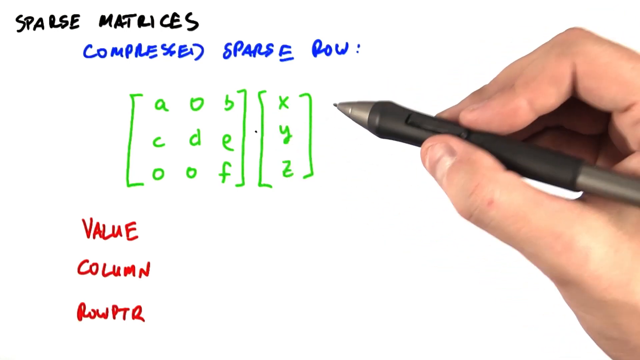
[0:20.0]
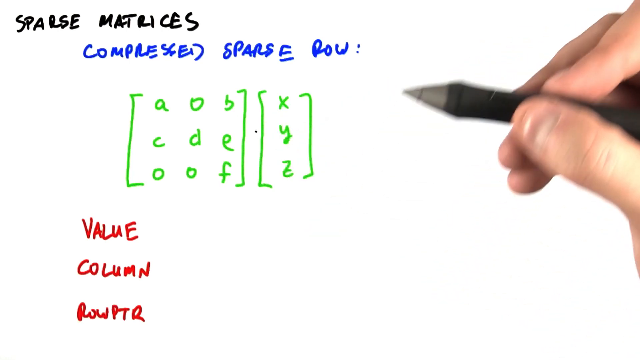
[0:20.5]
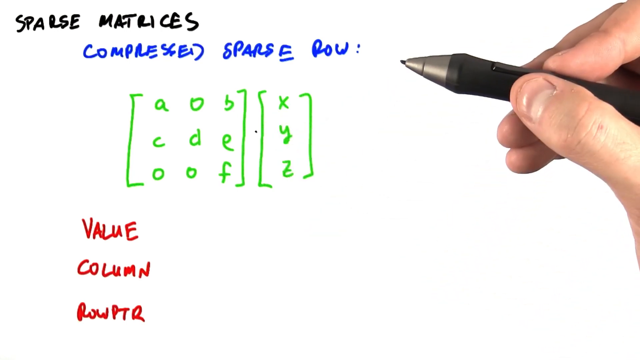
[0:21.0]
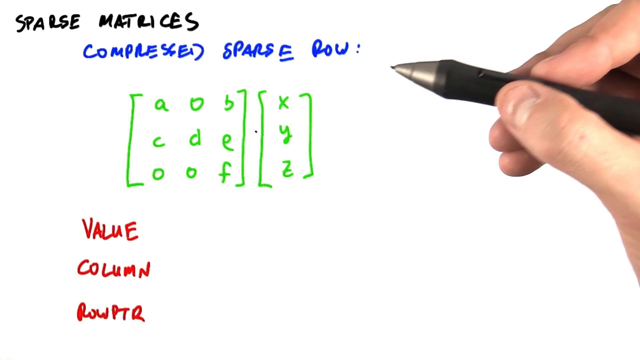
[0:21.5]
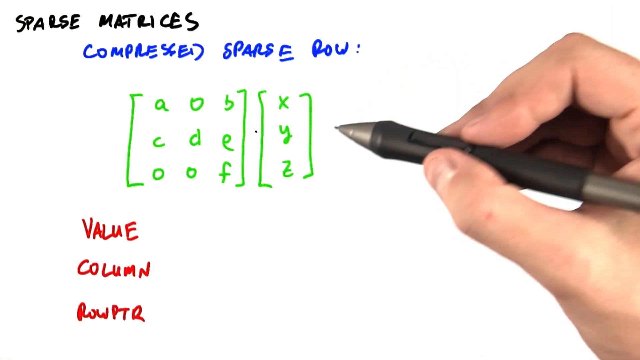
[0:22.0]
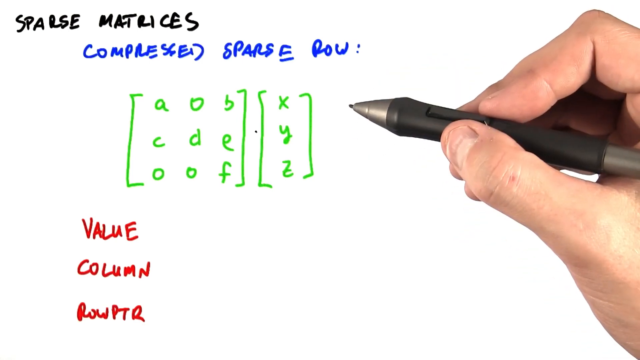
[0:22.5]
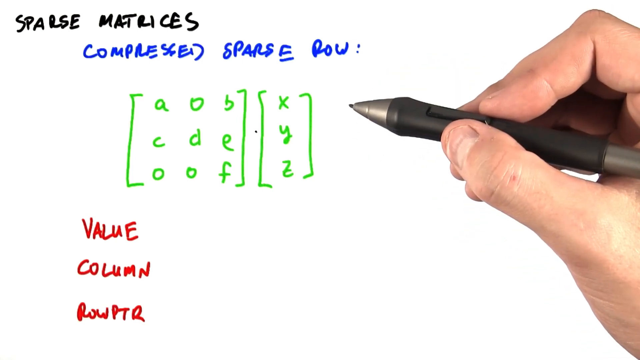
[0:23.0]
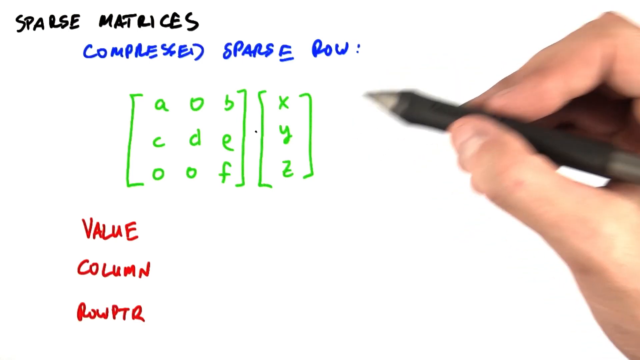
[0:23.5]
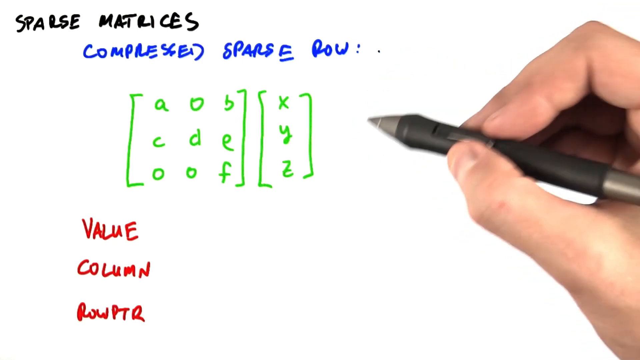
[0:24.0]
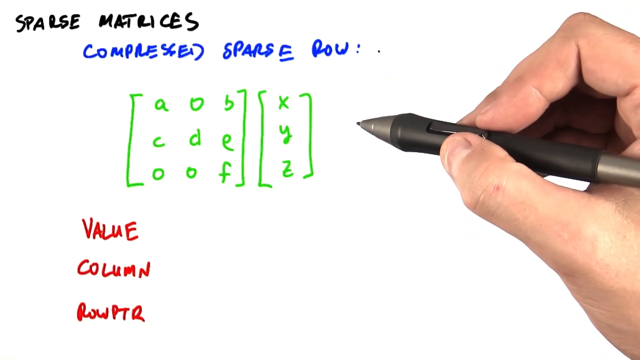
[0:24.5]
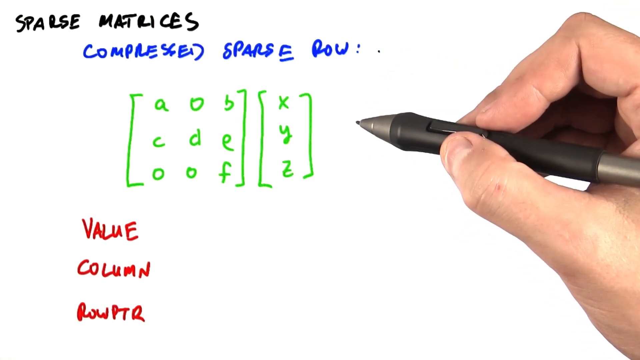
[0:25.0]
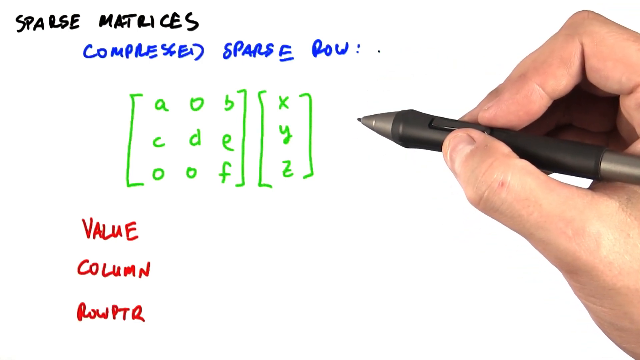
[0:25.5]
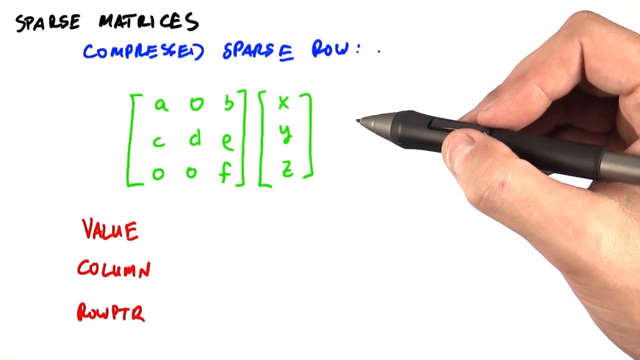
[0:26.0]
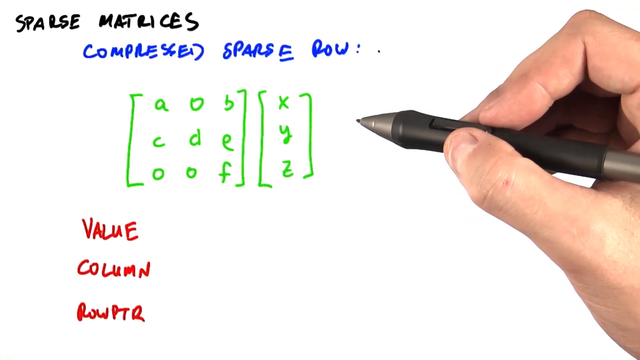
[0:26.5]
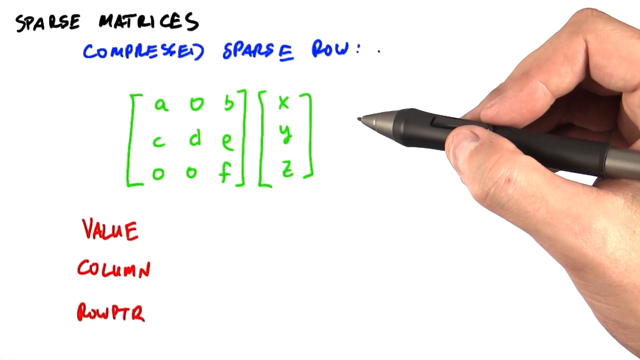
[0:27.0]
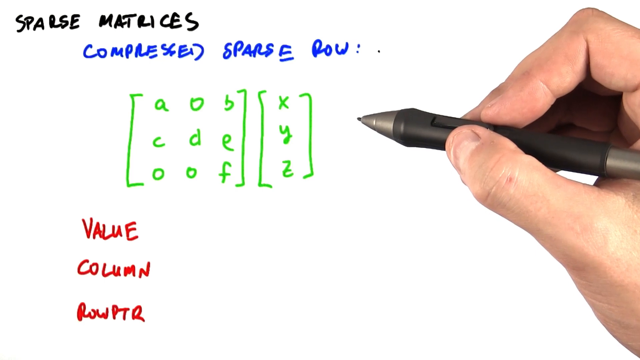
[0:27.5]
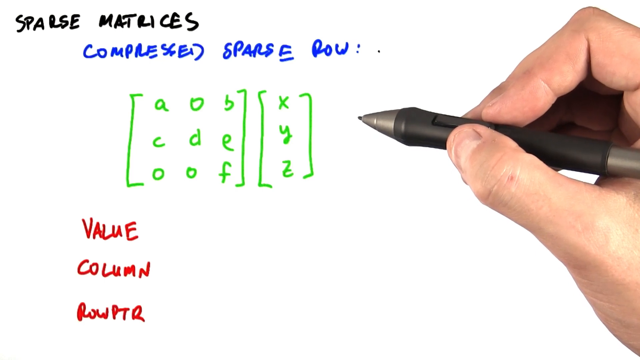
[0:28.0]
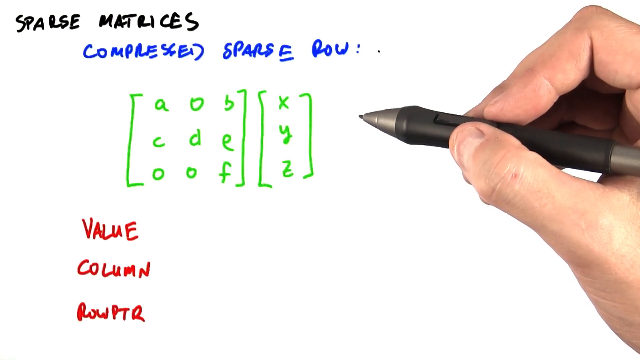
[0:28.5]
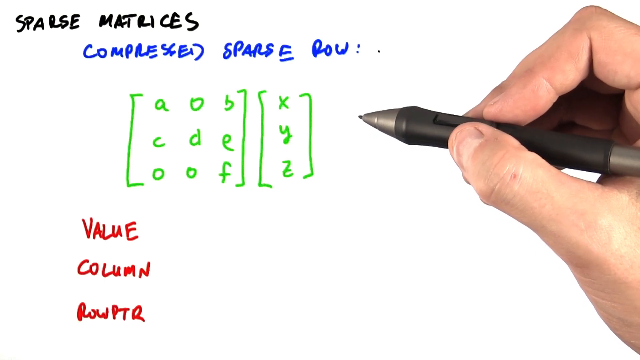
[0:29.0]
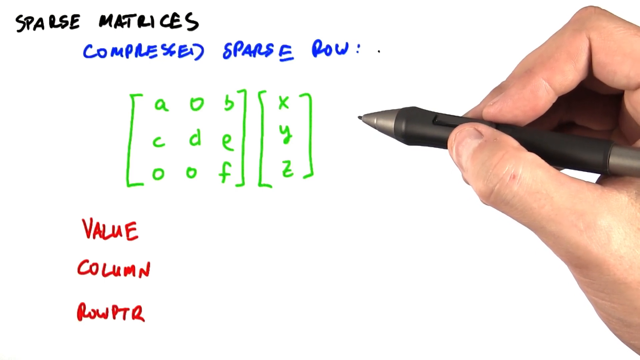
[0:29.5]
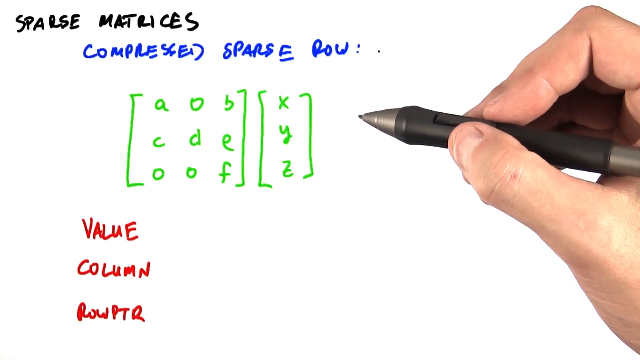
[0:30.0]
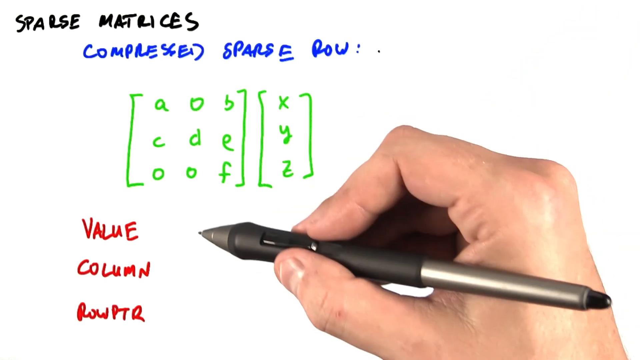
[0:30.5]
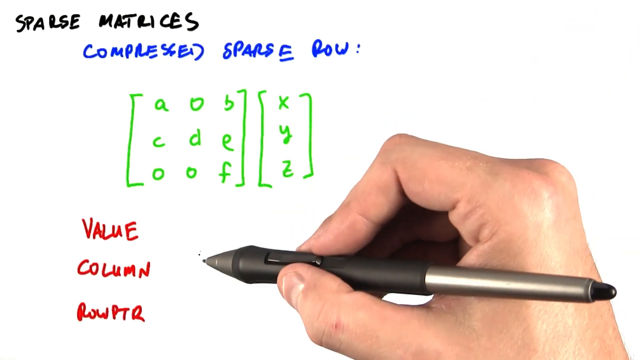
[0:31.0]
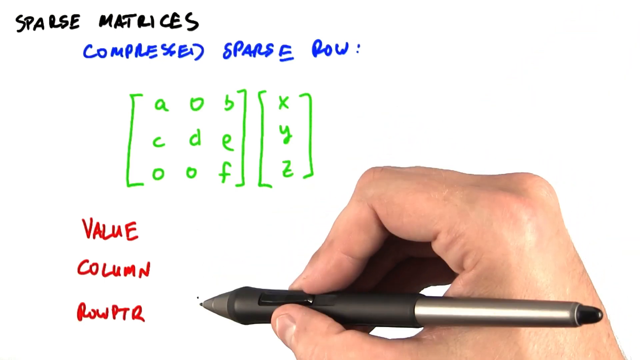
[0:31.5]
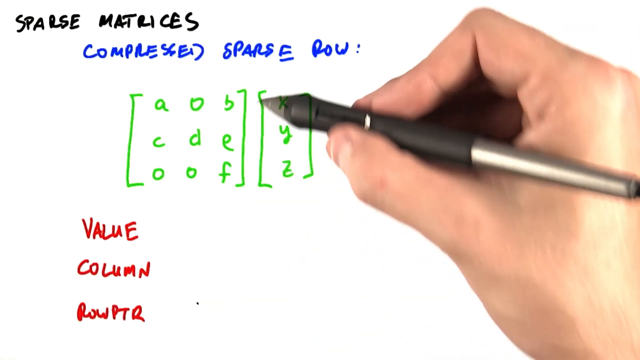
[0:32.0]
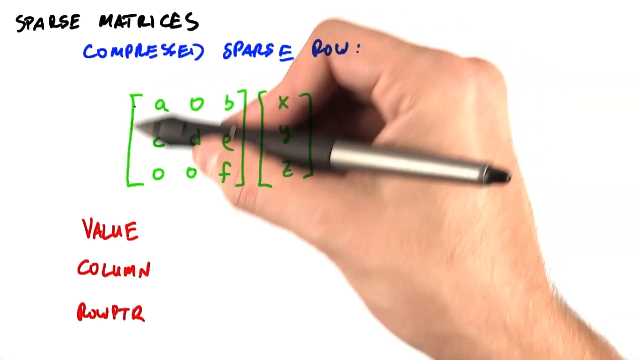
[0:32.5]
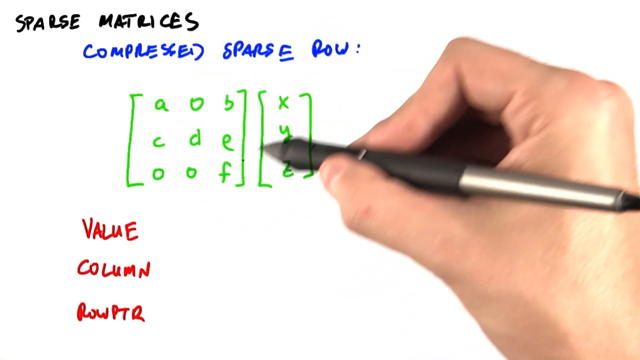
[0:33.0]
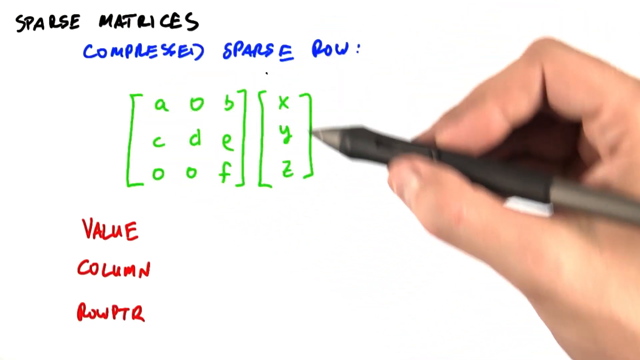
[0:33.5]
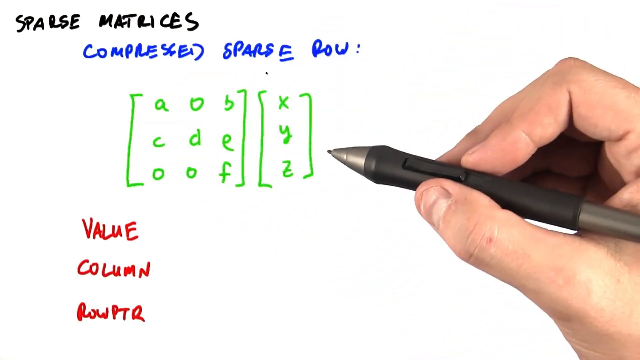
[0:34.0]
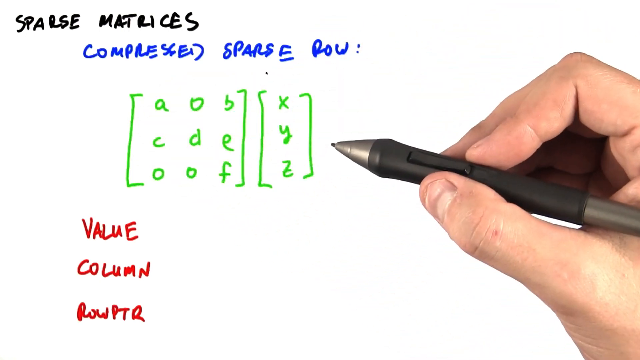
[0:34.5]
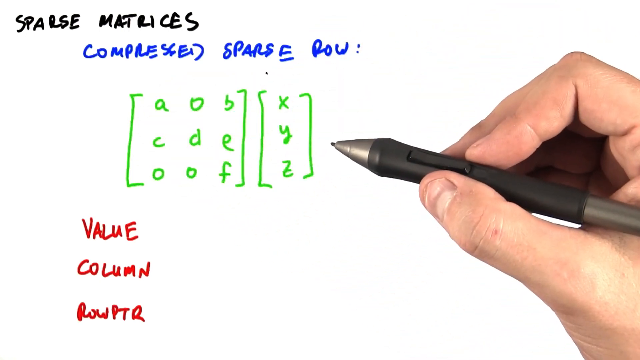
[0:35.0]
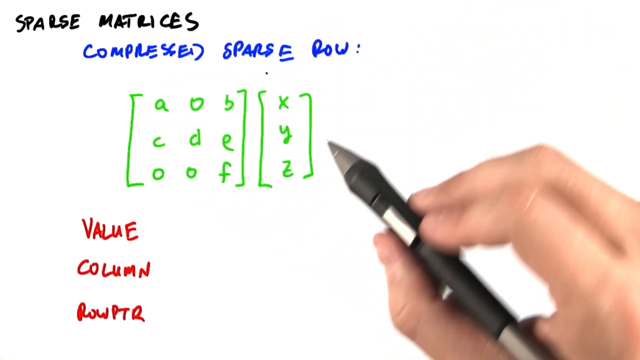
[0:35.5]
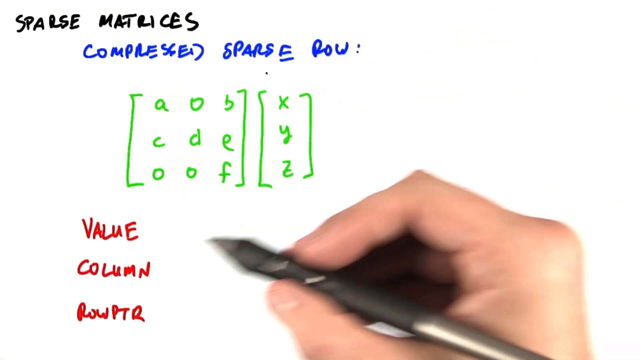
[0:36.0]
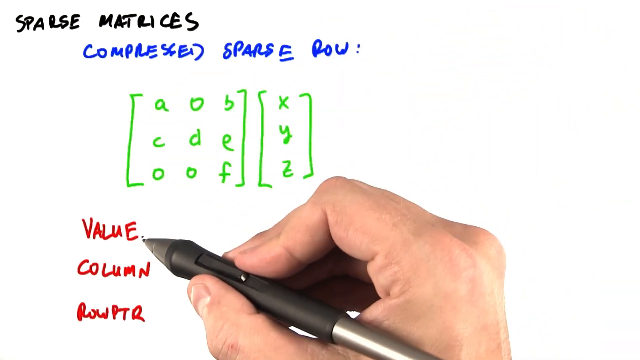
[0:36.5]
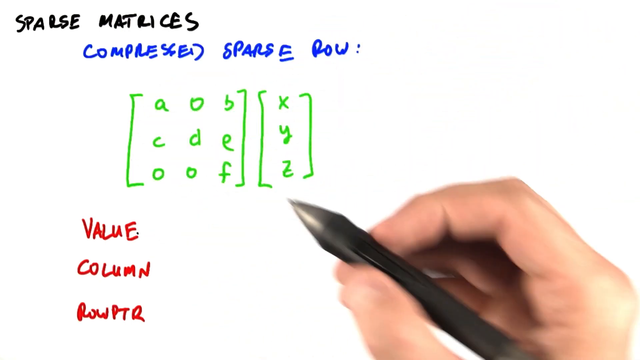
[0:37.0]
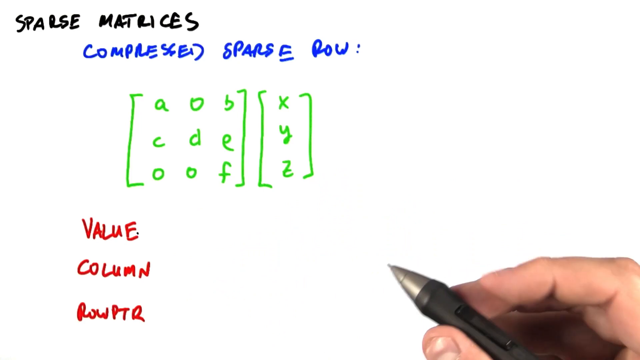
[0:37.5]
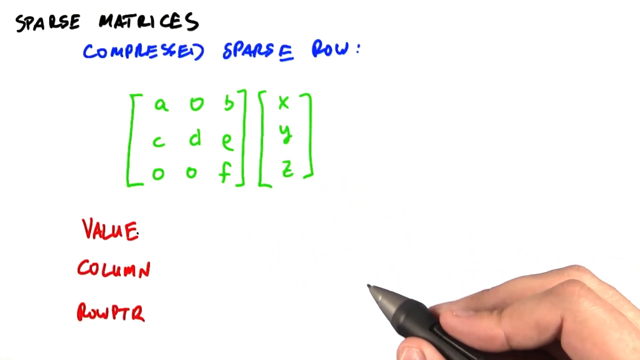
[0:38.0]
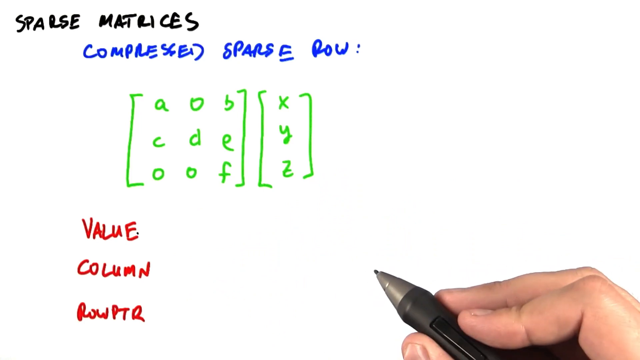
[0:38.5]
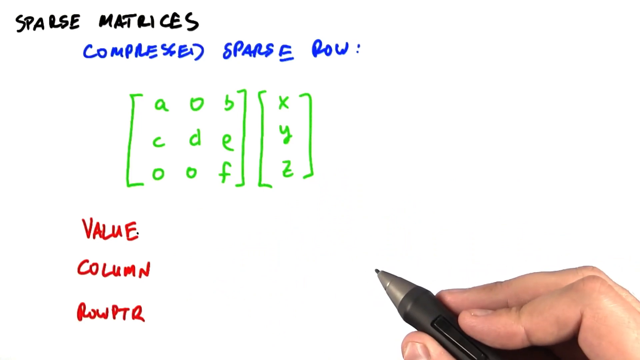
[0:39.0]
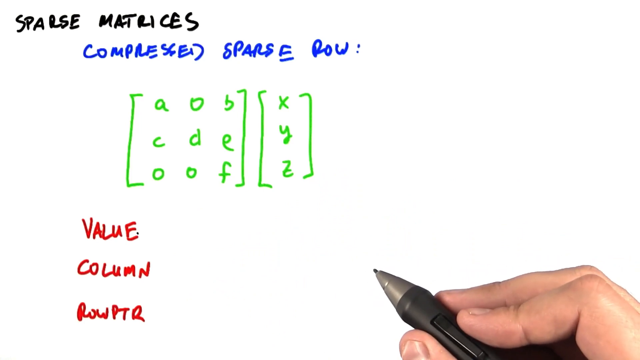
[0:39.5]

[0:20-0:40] The tutor, who has a white hand, holds a pencil that can write on a whiteboard and is about to calculate the matrices, moving the pencil back and forth. They write with their right hand. The pencil is grey and black, with a black switch in the middle and a black tip. The title "sparse matrices" is in black capitals, and under it is the subheading "compressed sparse row" in blue capitals. Under that are two vectors: the bigger one reads A, C, O in its first column, 0 or O, D, O in the next, and B, E, F in the next, and is then closed. The next vector reads X, Y, Z going down in a column, and is then closed. Below that are "value", "column" and "row PTR", all in red capitals. The background is all white.